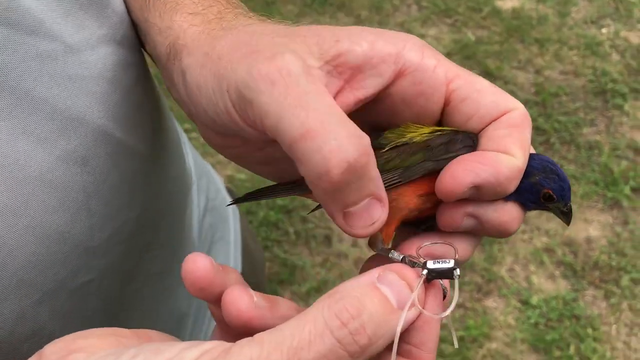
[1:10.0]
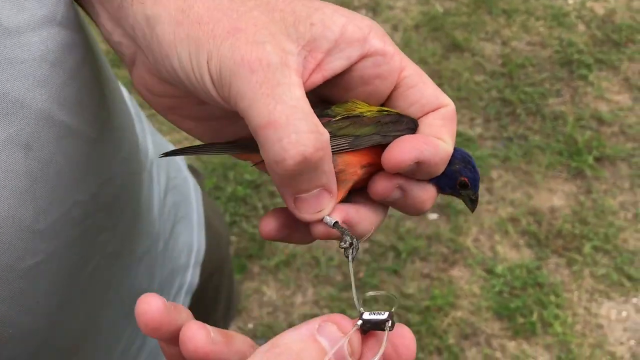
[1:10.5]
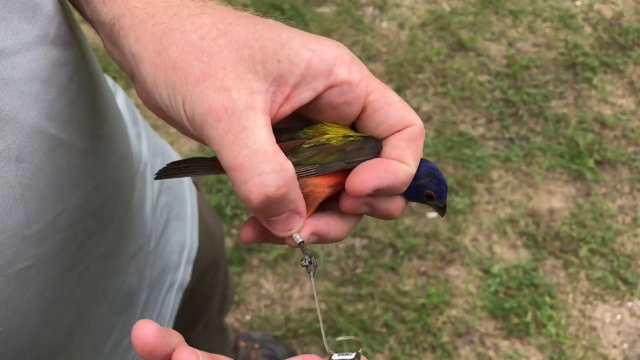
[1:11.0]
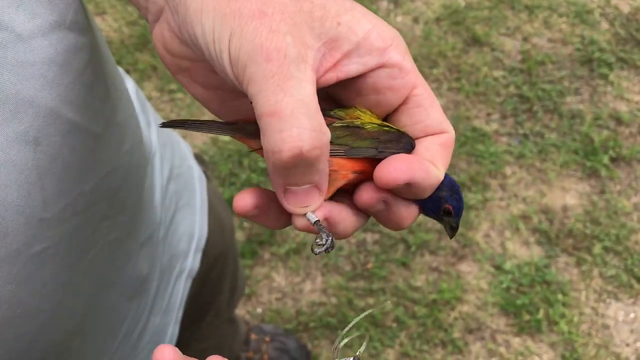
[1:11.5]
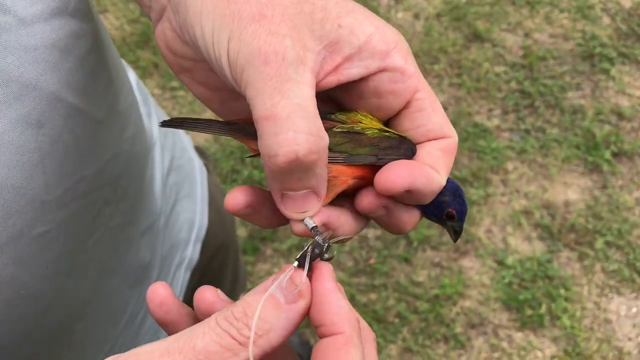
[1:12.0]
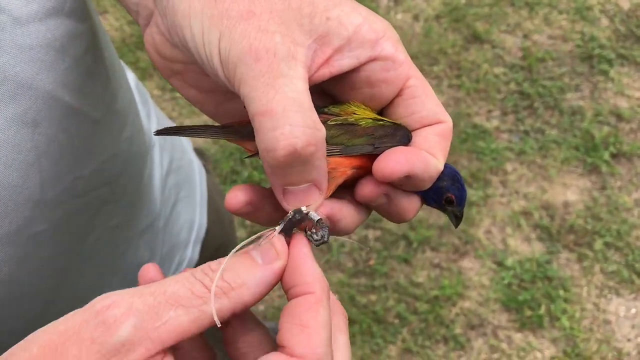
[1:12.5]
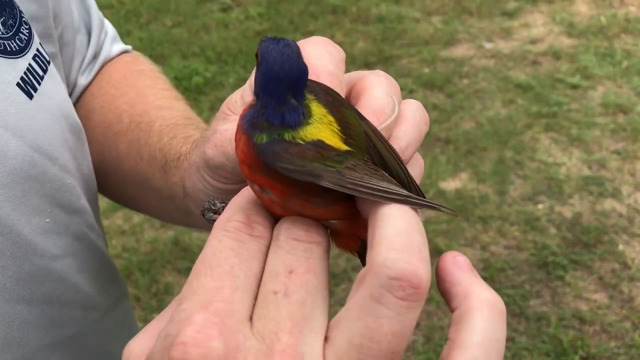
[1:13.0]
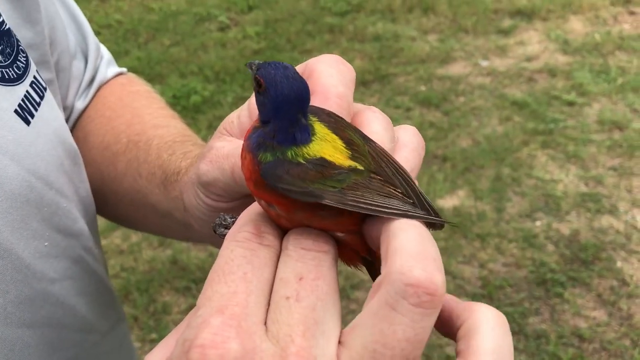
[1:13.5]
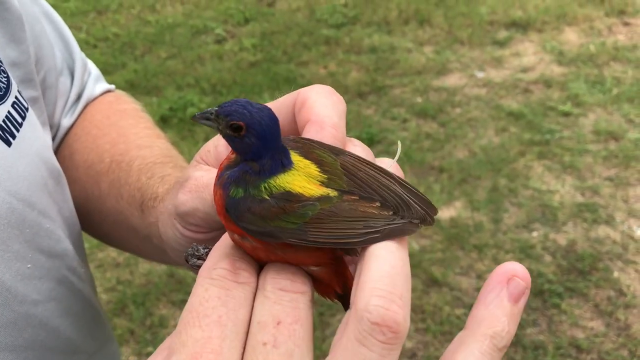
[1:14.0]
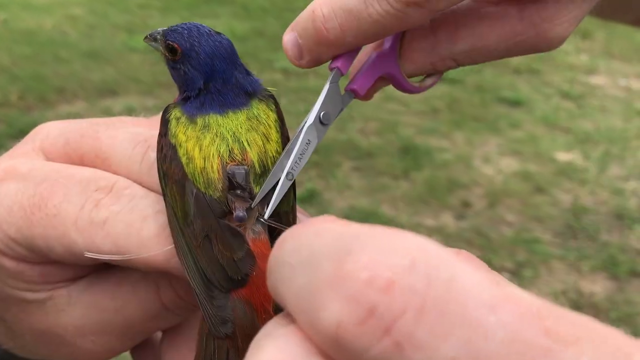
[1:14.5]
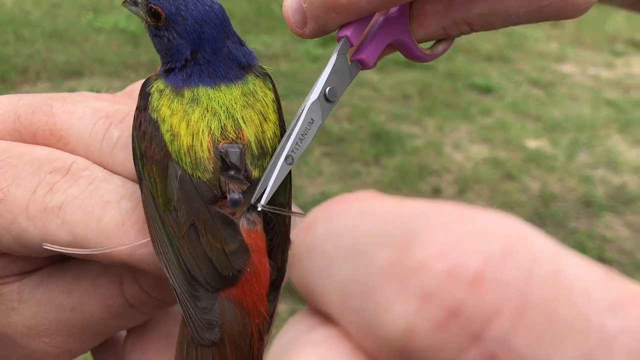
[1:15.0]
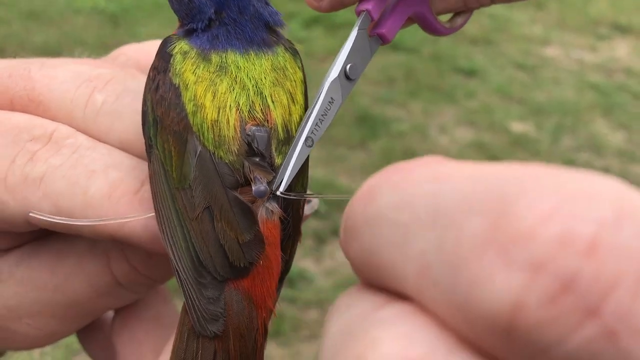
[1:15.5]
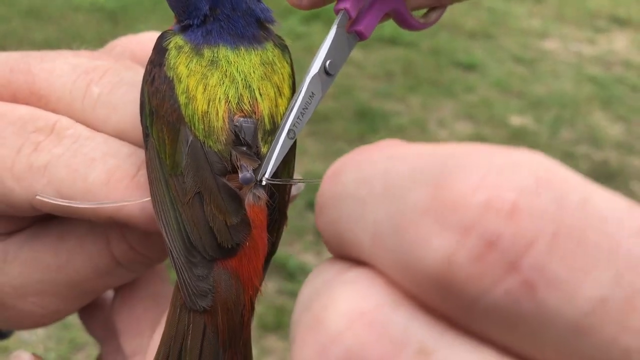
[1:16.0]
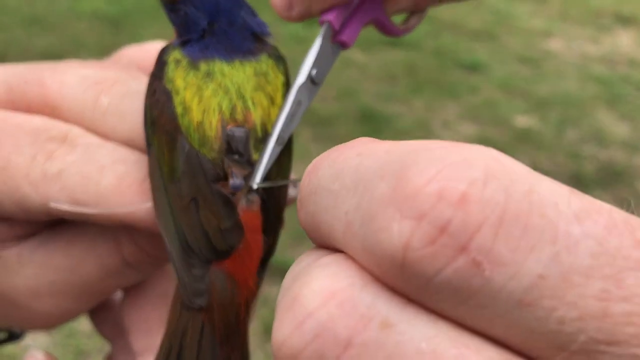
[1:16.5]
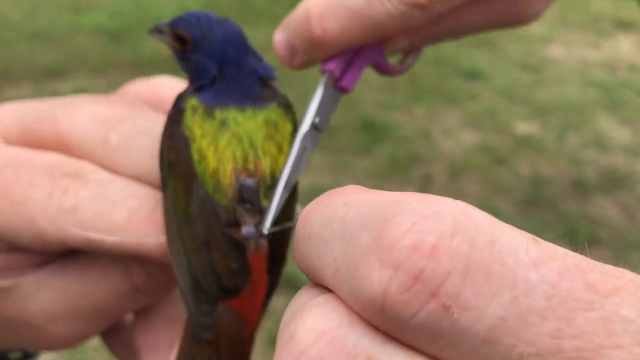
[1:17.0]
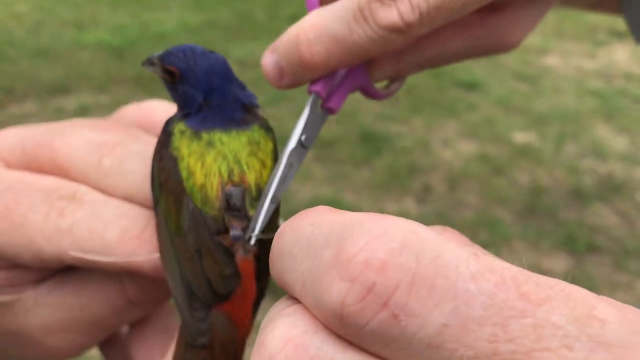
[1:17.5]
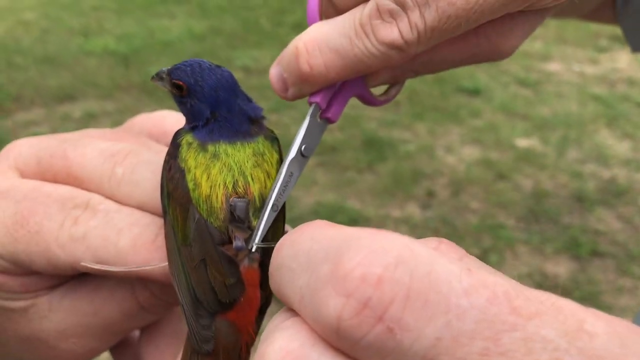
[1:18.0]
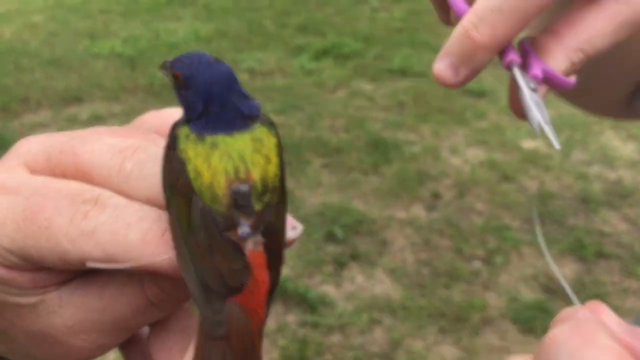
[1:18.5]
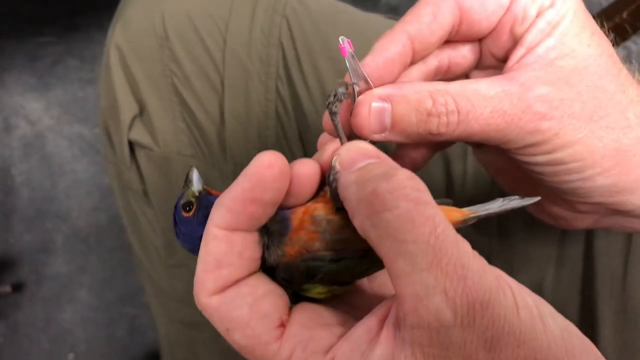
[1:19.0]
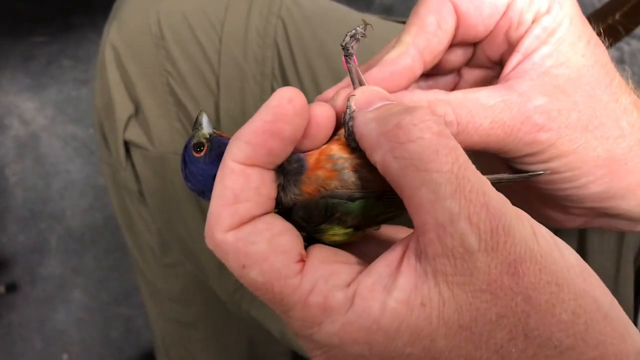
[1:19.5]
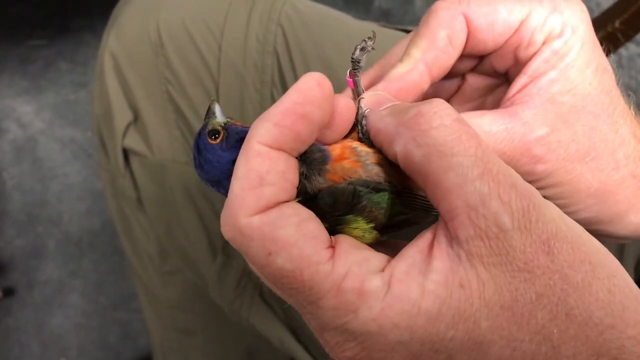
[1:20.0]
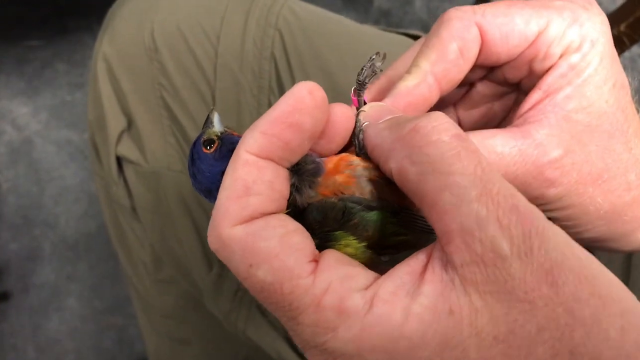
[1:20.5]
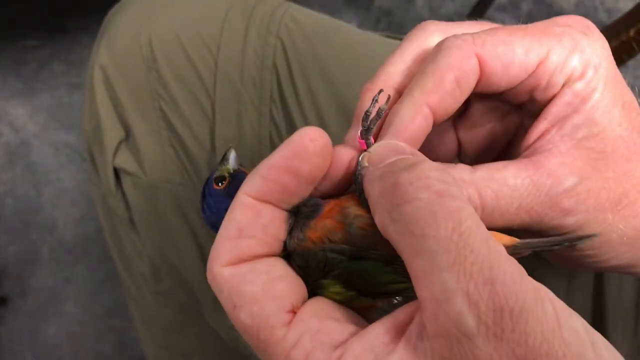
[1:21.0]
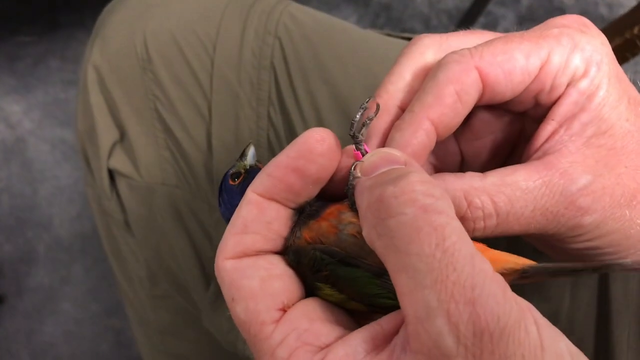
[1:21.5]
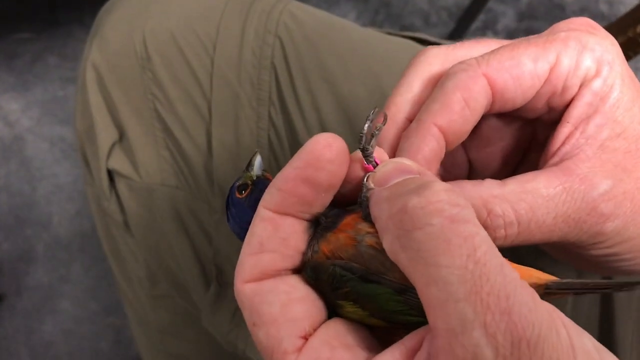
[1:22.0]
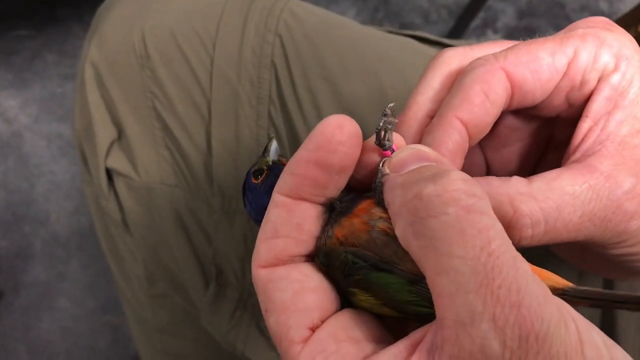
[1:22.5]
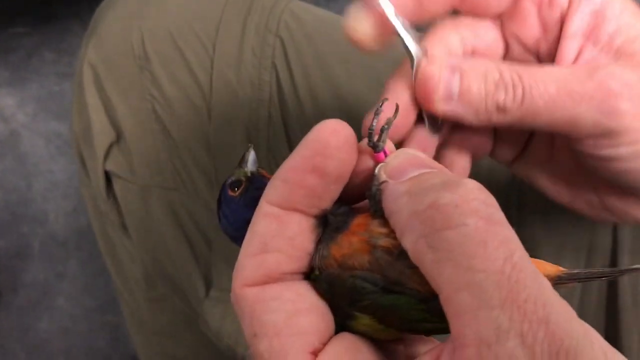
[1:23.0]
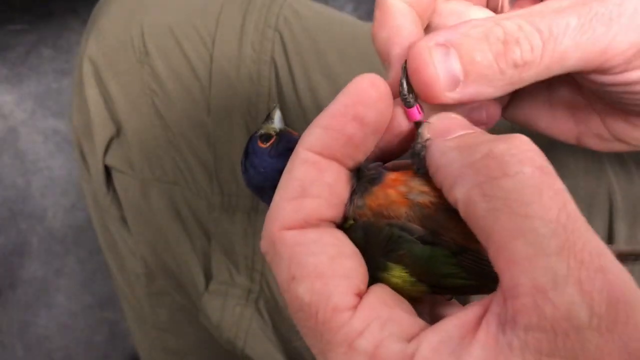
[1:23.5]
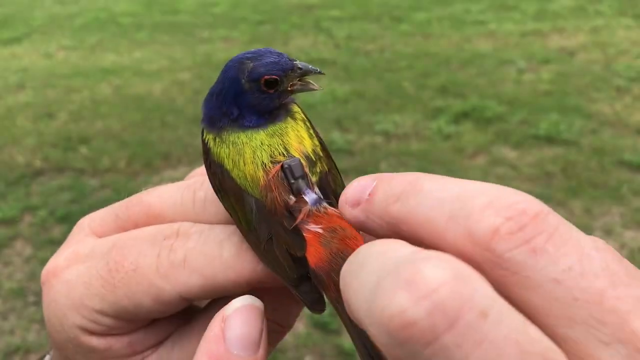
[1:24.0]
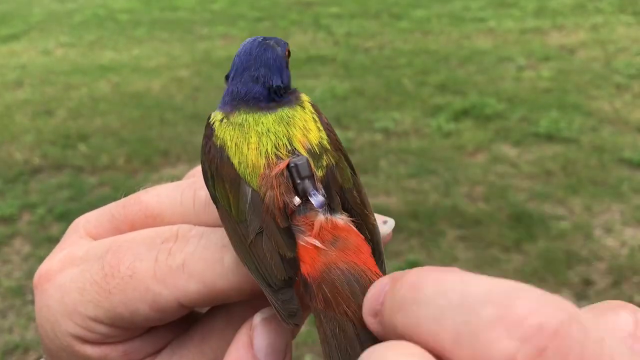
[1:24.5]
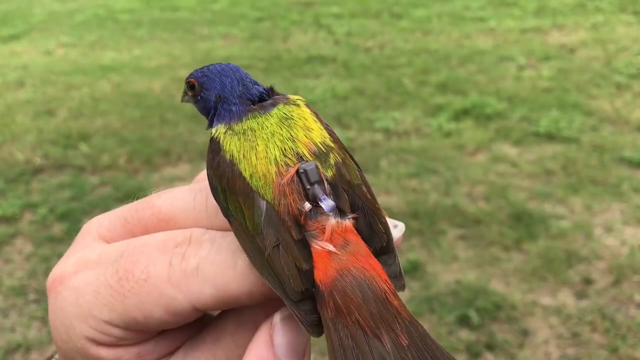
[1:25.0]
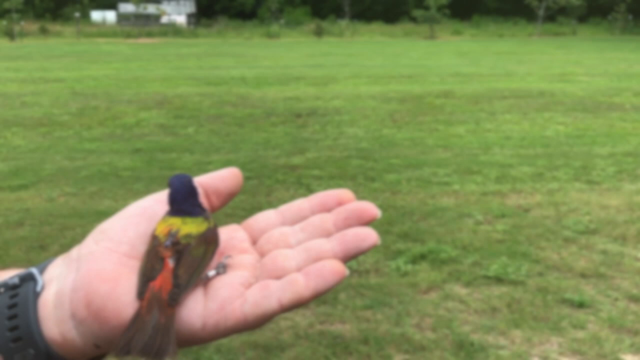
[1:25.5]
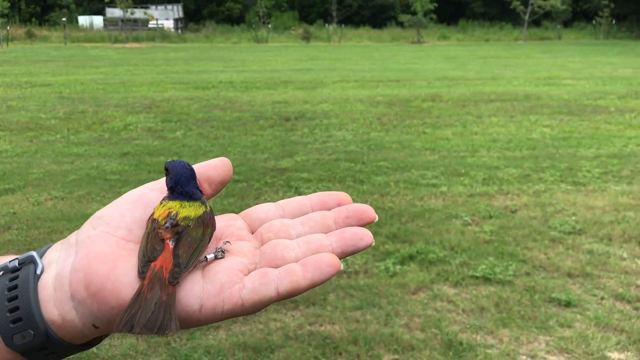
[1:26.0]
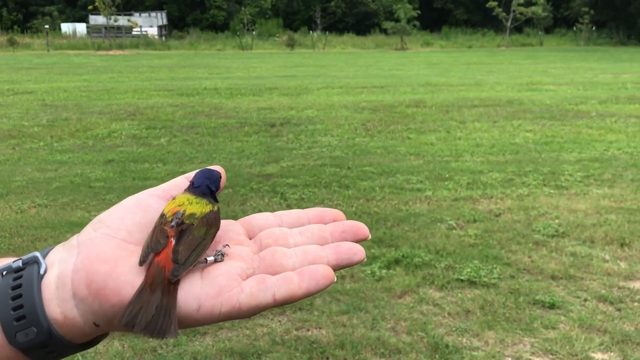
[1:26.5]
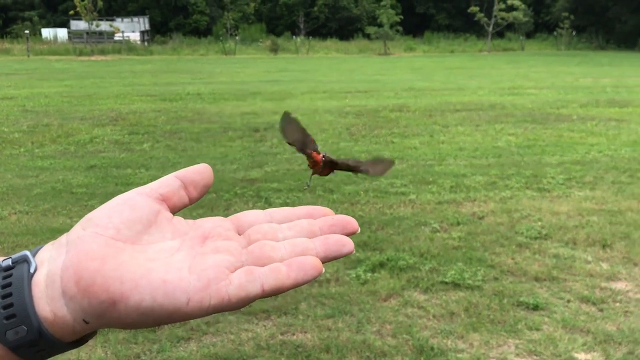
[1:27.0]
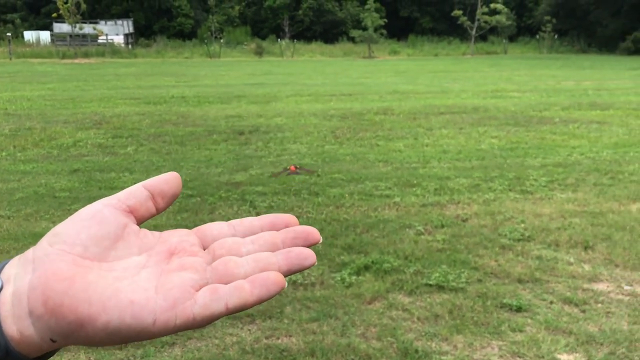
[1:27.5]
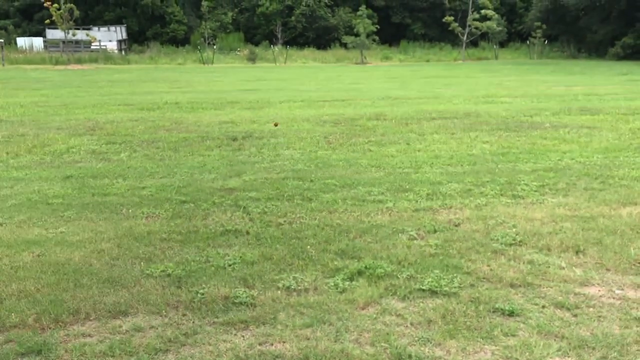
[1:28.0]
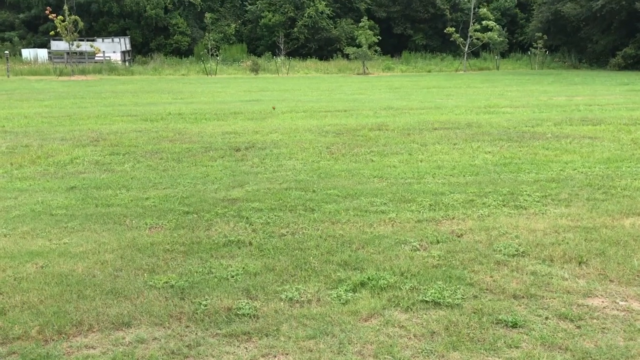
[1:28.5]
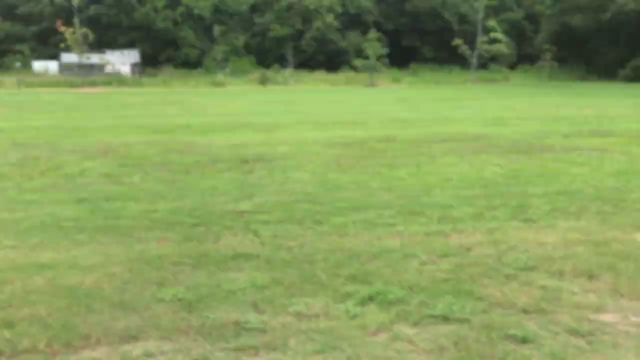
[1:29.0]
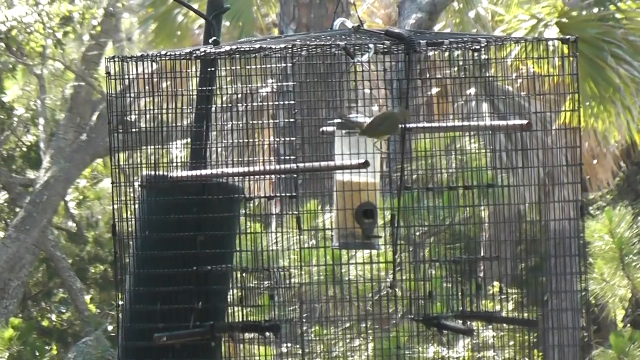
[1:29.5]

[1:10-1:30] The man stands in a field. In his left hand he holds a bird with a blue head and orange feathers on its body, with the bird's head between his first and second fingers so it cannot fly away. In his right hand he holds the wired looped item, and he brings it towards the bird. He takes the bird's foot between the thumb and forefinger of his left hand while still holding the bird's neck between his first and second fingers, and loops the item onto the bird through its foot. The centre part appears to be clipped to the bird's back, with a little round node coming out of it. The man uses a pair of scissors to trim the ends of the plastic wire off, and clips something else to the bird's leg with a pink clip near the foot. He then strokes the feathers on the bird's back. It looks as though the loops were put over each foot, with the brown or black centre part on the back. The bird then rests on the palm of his hand and flies away with the item still attached. Next, a bird cage in an outside area with a feeder in the centre appears.